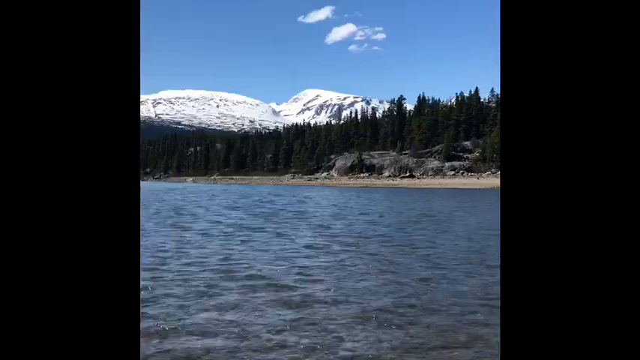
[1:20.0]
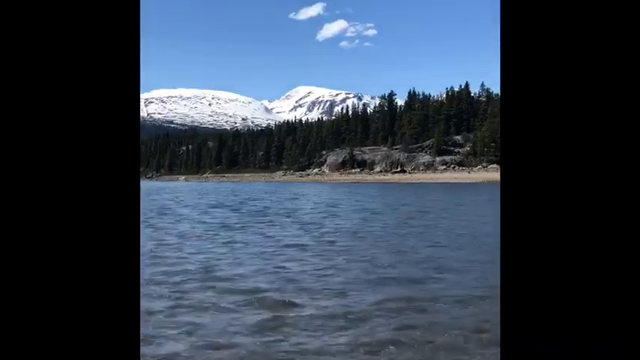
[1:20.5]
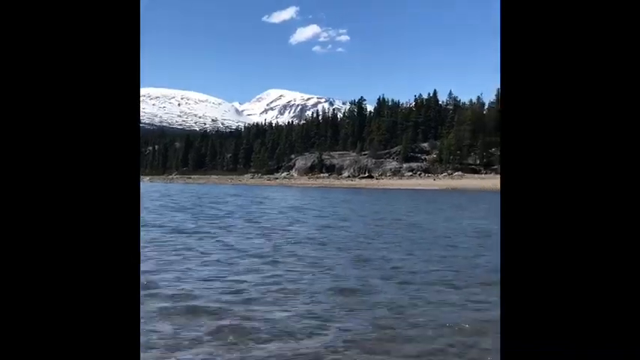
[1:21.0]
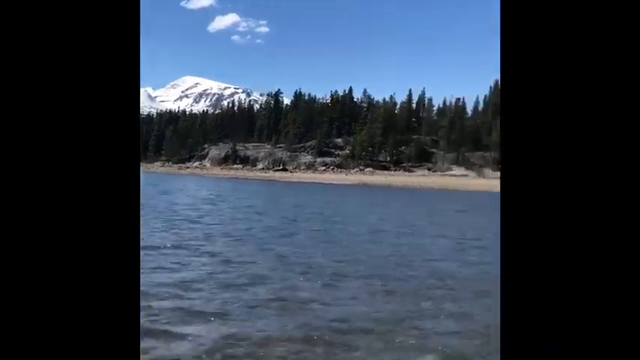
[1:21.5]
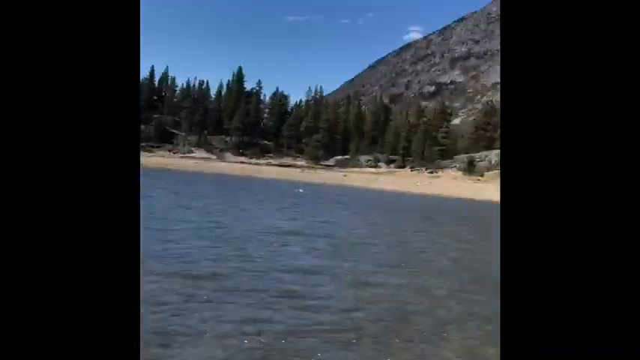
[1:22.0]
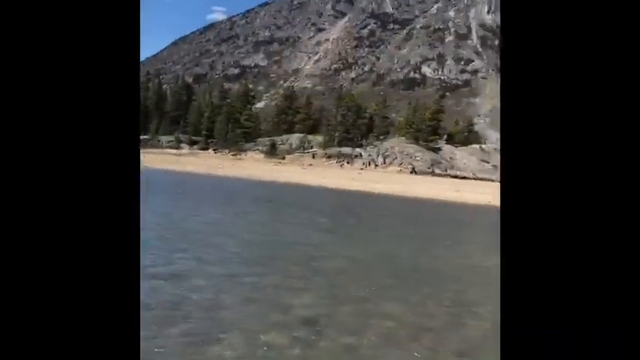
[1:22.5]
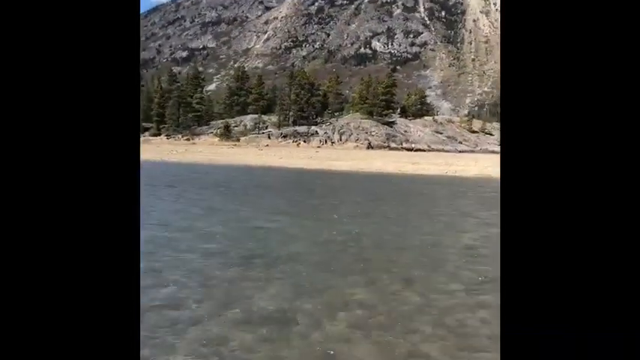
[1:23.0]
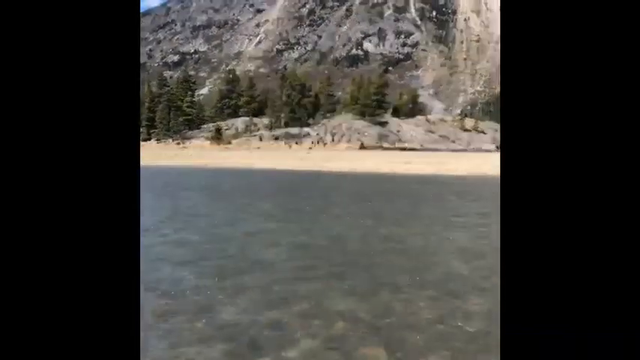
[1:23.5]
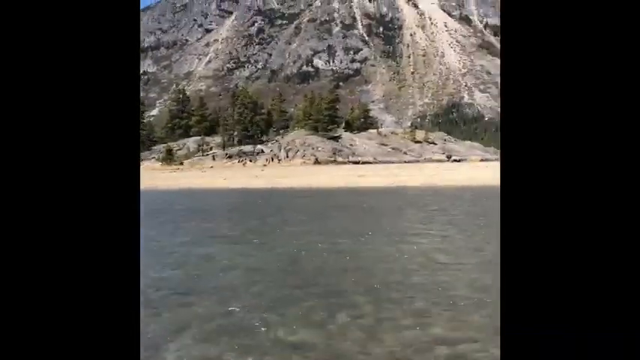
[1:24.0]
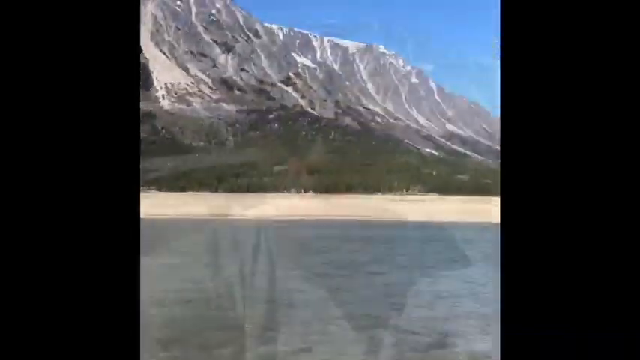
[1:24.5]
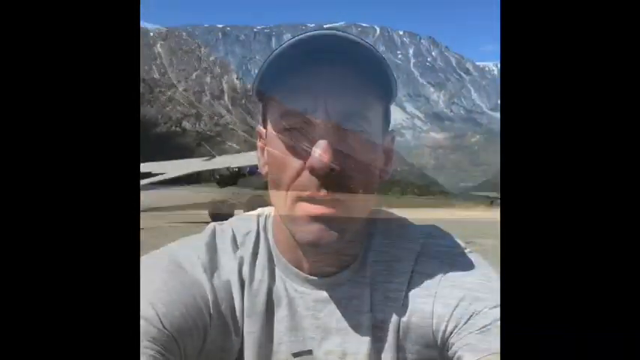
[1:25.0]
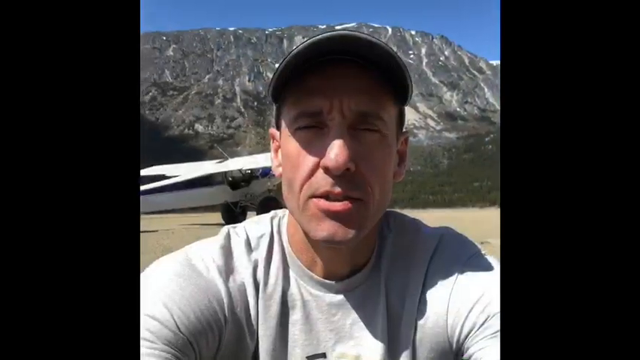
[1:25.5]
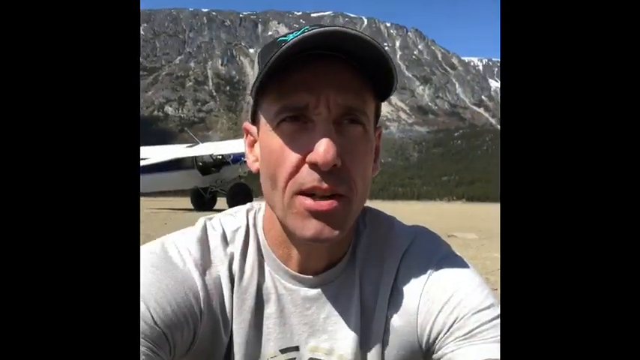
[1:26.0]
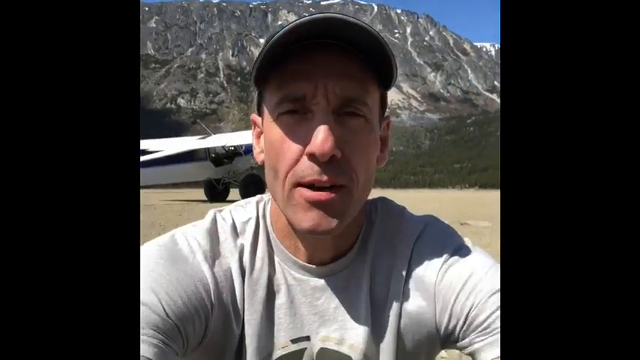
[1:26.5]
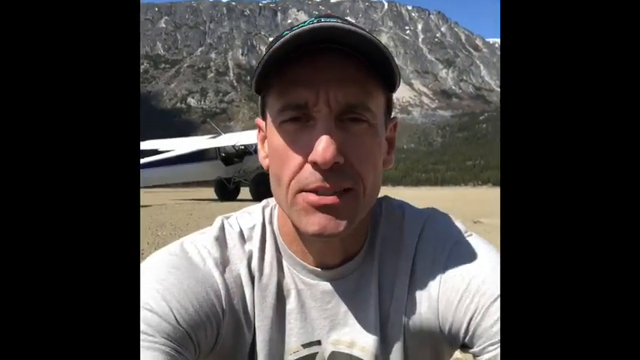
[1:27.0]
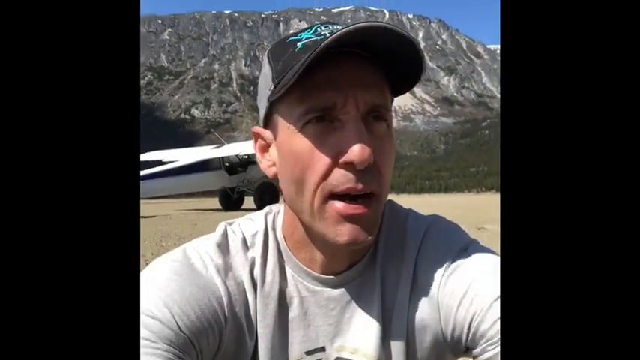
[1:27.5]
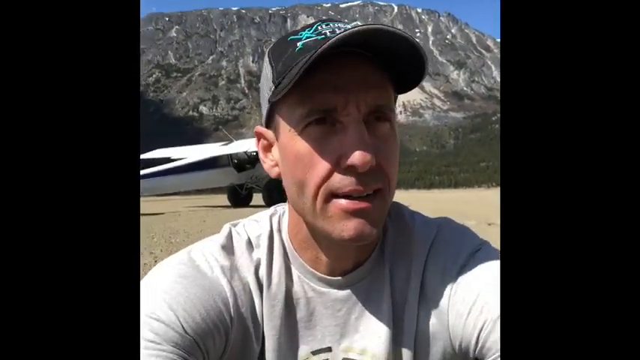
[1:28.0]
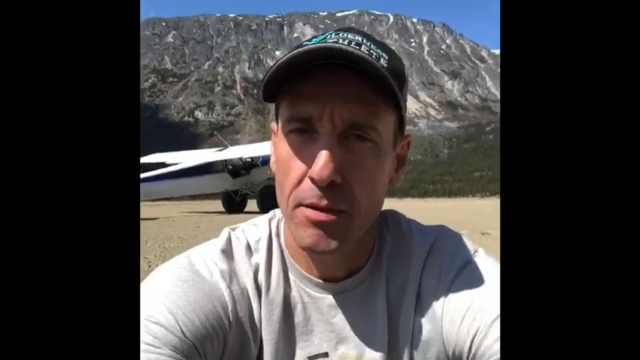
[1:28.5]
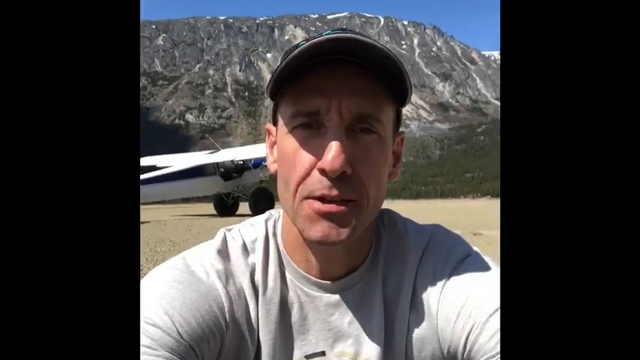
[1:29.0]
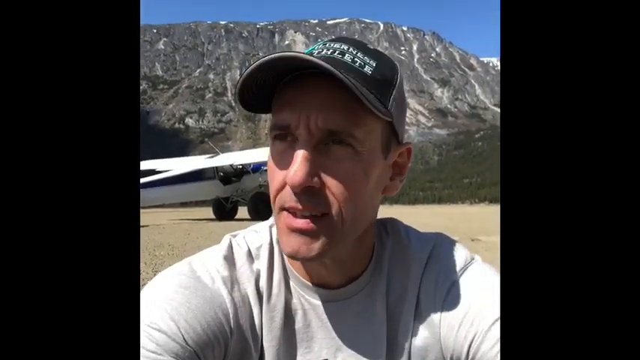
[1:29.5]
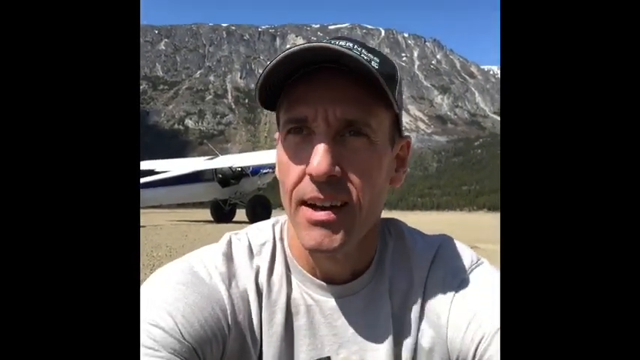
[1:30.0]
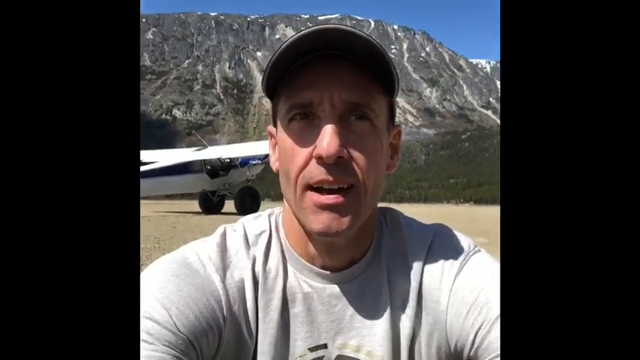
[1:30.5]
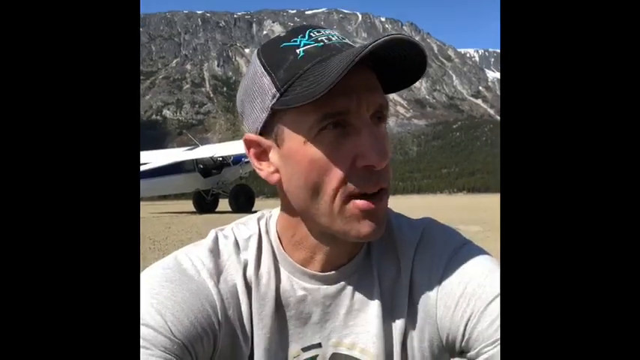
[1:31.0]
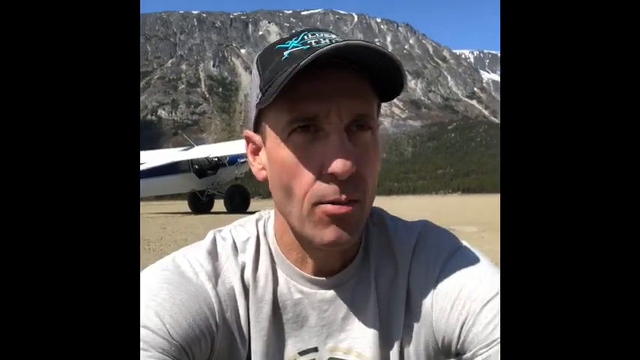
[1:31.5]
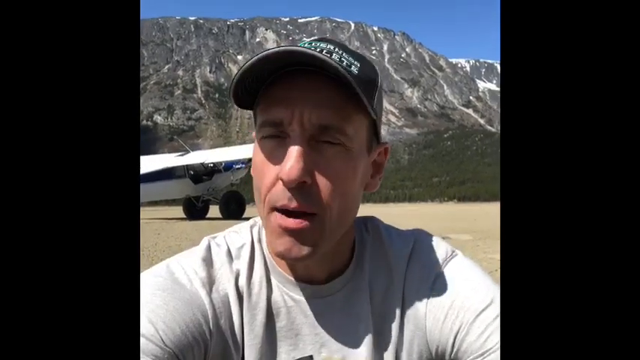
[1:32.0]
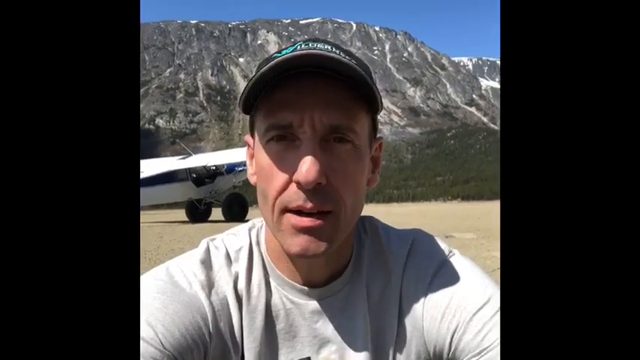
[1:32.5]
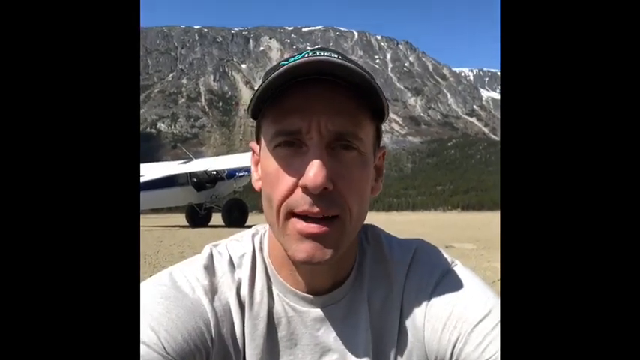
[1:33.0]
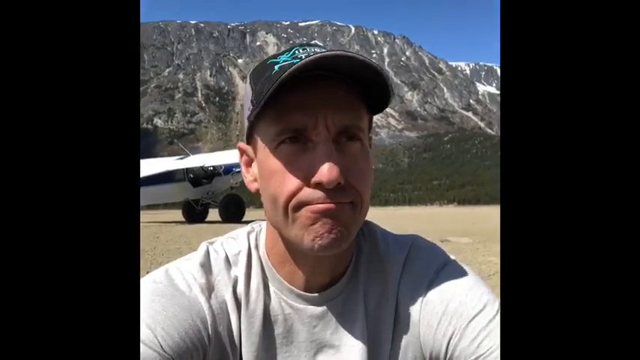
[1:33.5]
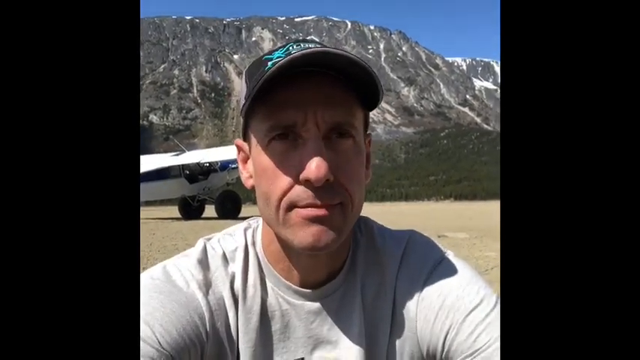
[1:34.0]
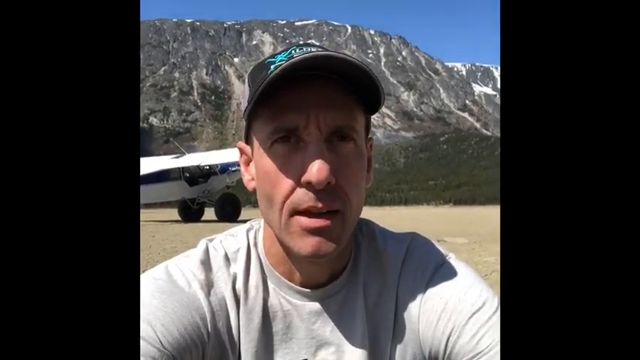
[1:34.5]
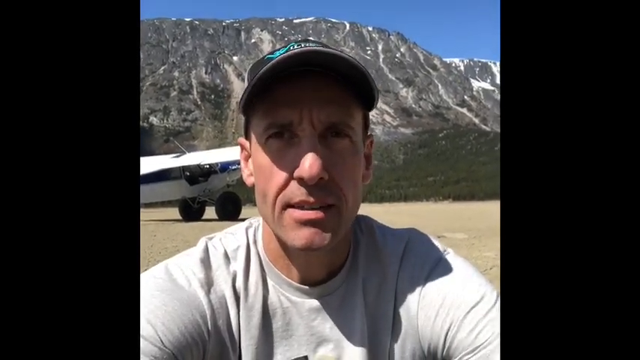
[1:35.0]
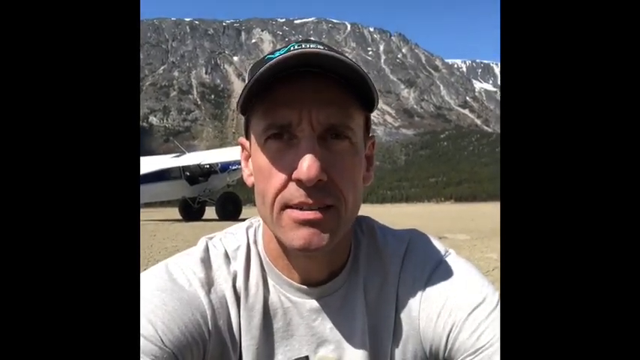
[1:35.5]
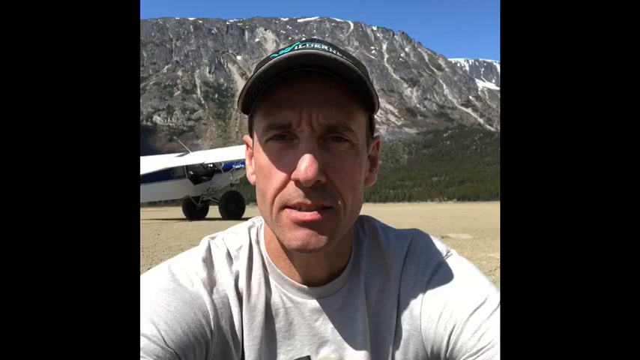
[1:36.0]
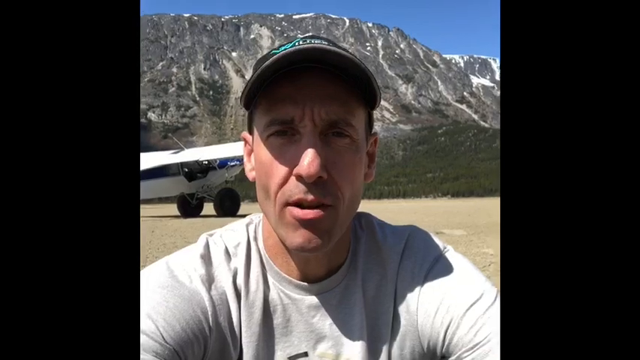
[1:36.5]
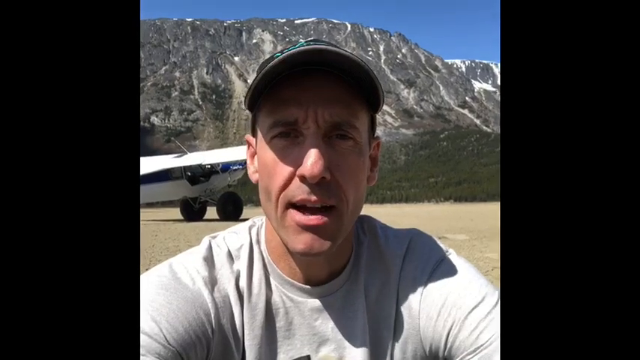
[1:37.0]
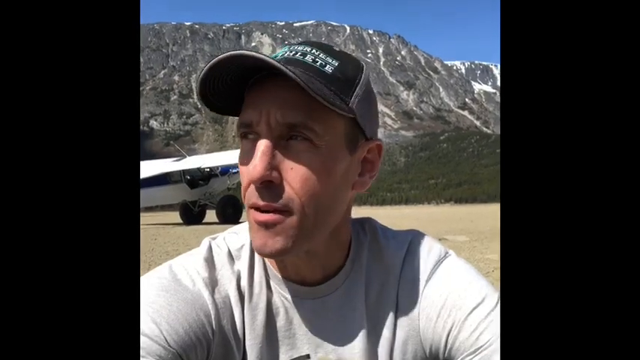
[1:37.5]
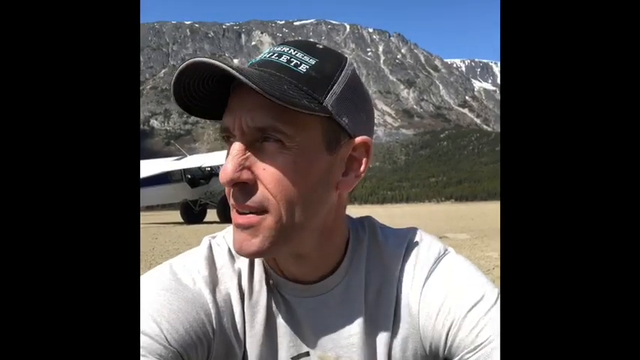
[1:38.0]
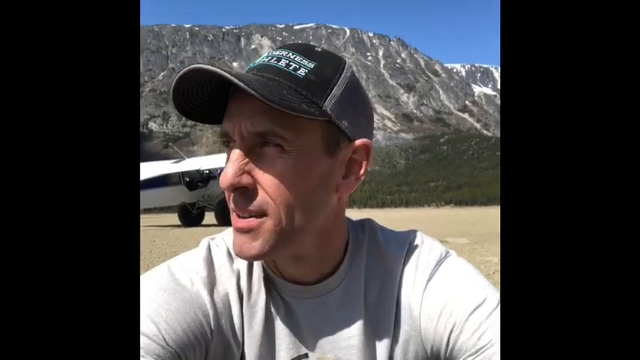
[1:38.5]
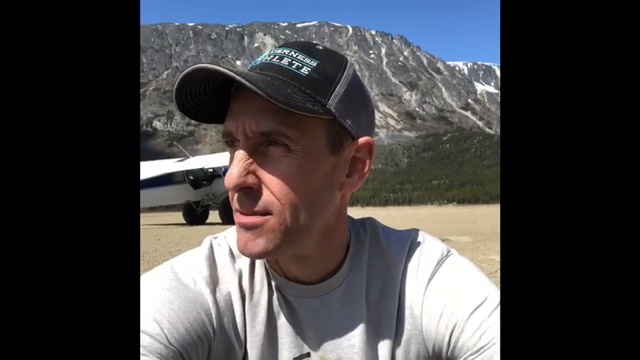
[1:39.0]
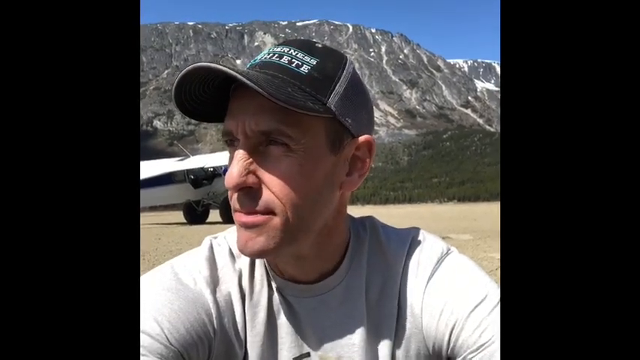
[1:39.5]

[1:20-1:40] The view is from someone standing in the middle of a shallow mountain lake or stream. The lake stretches out before the camera, its water blue with ripples from a slight breeze. In the distance is the shore, which appears to be sandy, with a pine forest coming almost to the lake's edge, and in the far background are snow-capped mountains and a blue sky. The view pans, showing that to one side another mountain comes right to the lake shore. The view cuts to a man speaking, seen from the shoulders up; he appears to be holding the camera out in front of him, with both arms stretched toward it. Behind him are a mountain and a white airplane. As he speaks he turns his head left and right as if not focusing on the camera. After a couple of seconds he frowns and shakes his head as if in disapproval, speaks a moment more, and looks off toward the left-hand side of the screen.